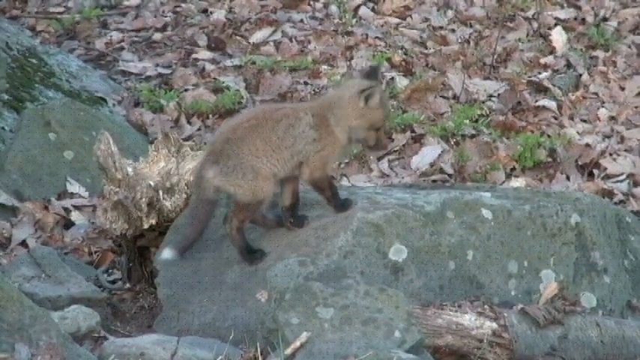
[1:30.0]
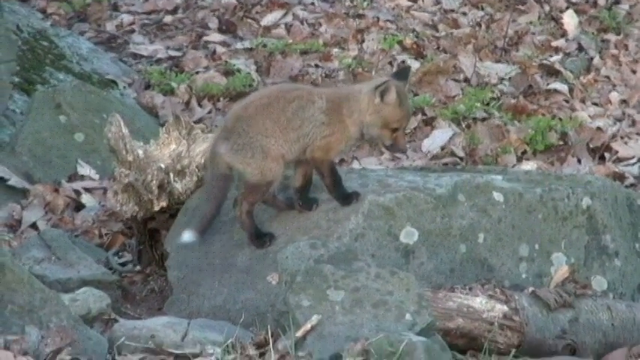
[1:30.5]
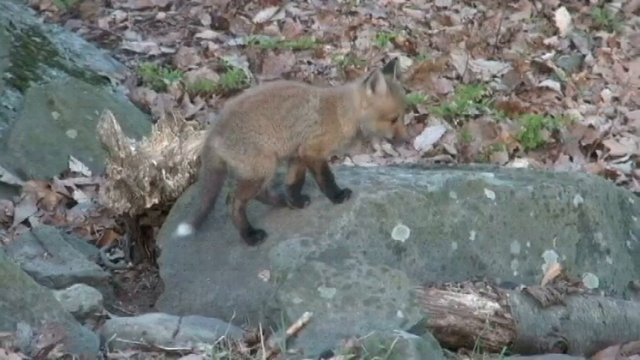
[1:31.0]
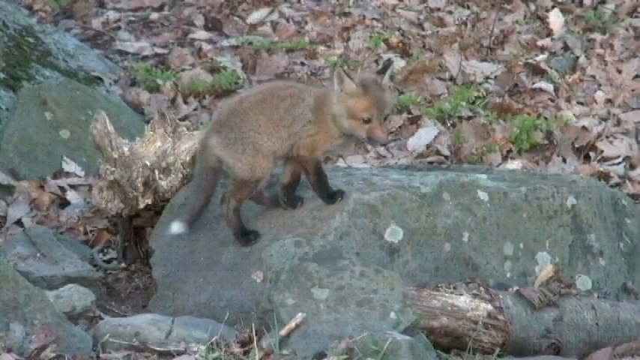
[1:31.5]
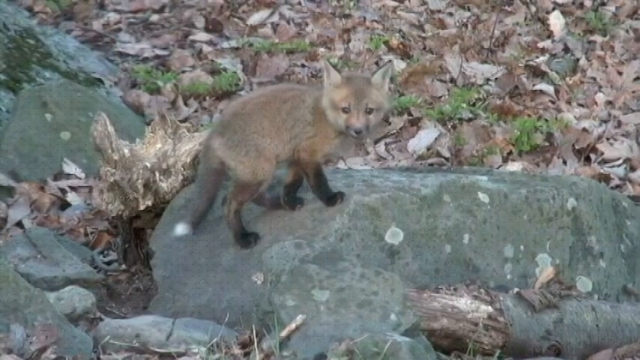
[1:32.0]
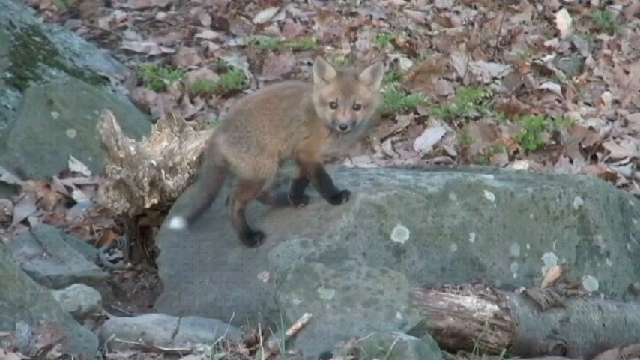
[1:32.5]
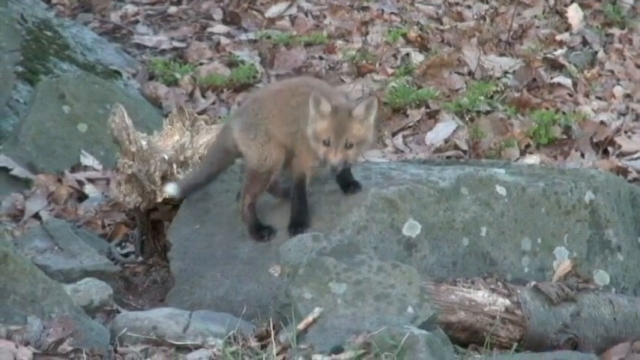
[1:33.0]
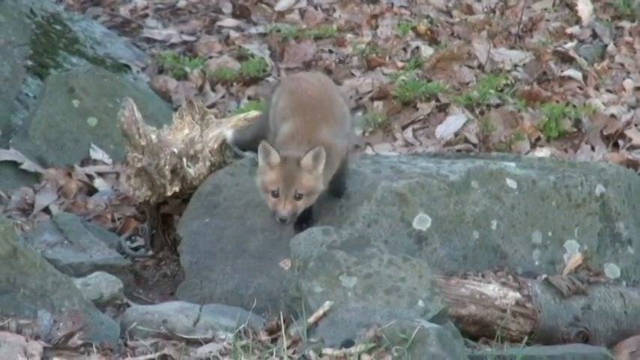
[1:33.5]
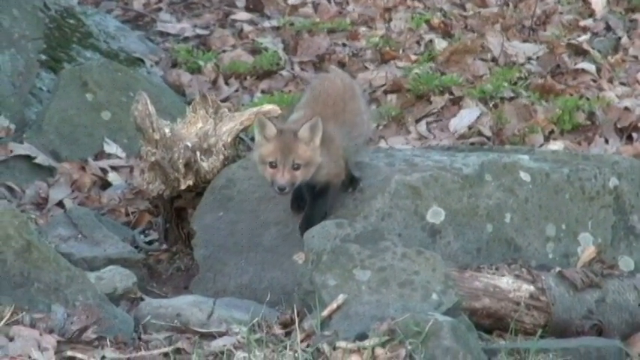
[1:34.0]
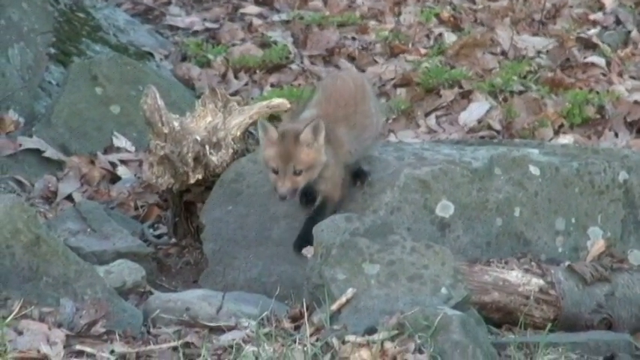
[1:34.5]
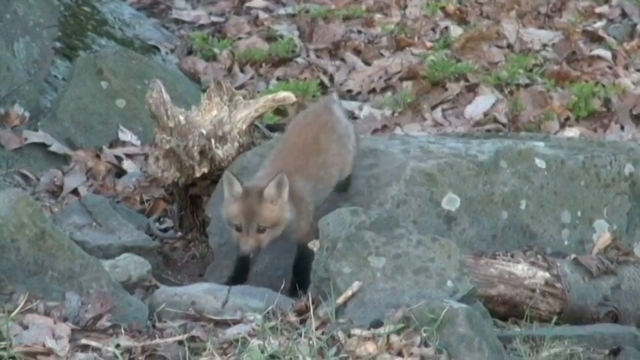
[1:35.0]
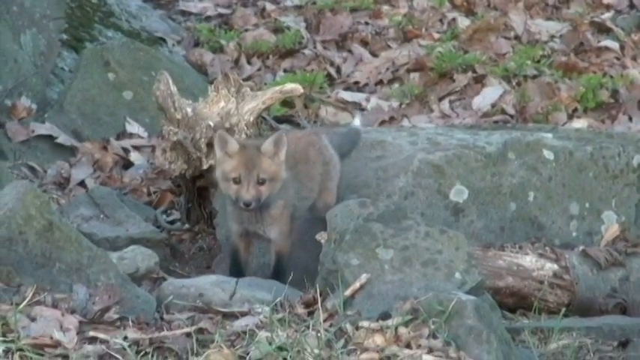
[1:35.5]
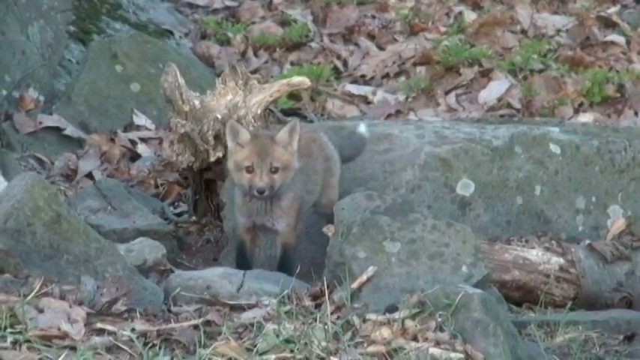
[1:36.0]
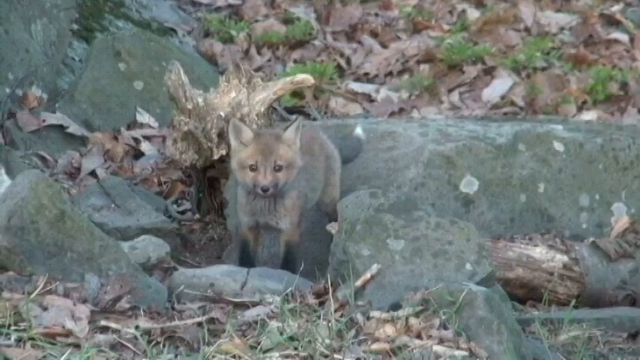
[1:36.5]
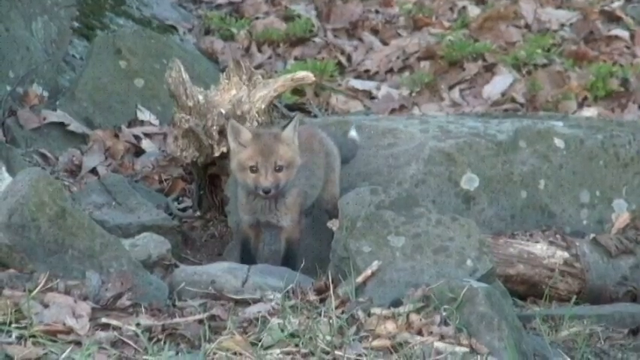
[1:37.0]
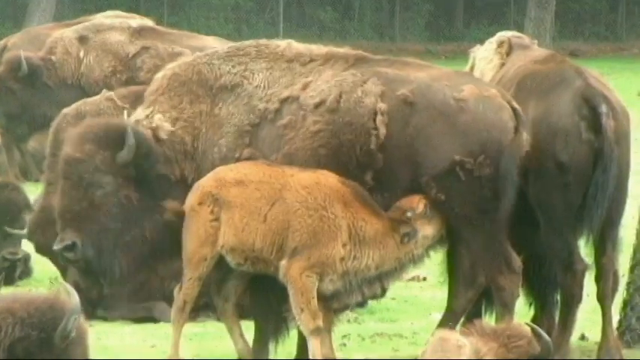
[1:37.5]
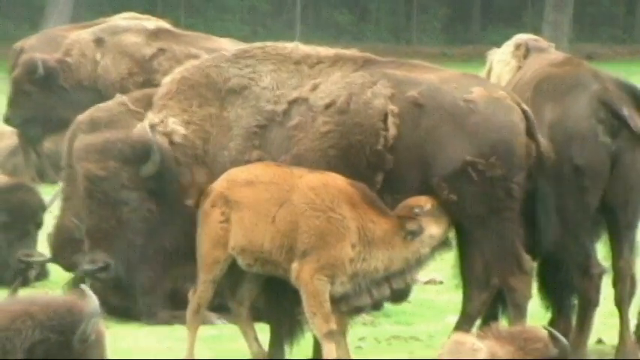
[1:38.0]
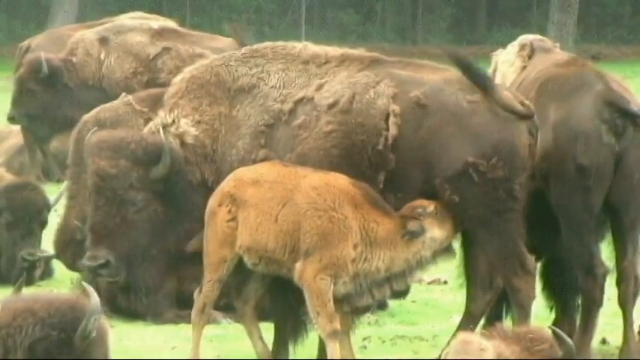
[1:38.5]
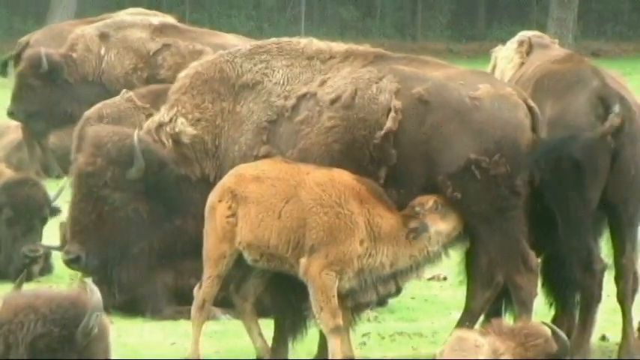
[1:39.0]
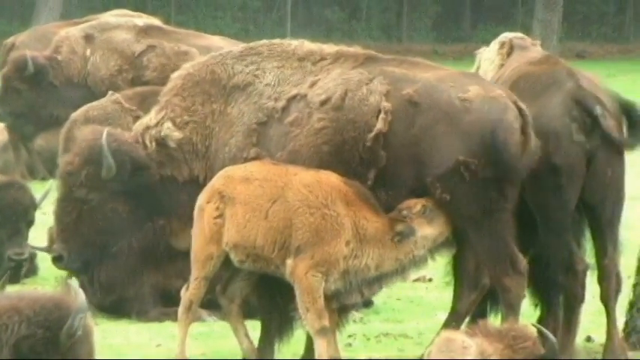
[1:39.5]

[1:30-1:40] A small young fox cub seems to be exploring some sort of forest, with a lot of dried leaves on the ground next to him, and seems to be exploring some rocks in the middle of the forest and dried leaves. The fox turns to look at the camera and looks startled, seemingly also slightly scared. Before it is seen whether he runs away, the video transitions to a young buffalo's mother, apparently a female buffalo, with a younger buffalo feeding from her milk.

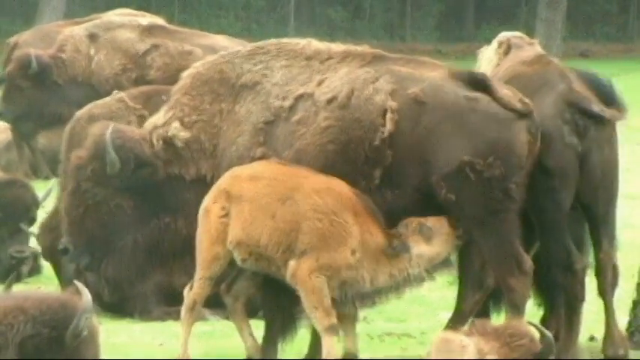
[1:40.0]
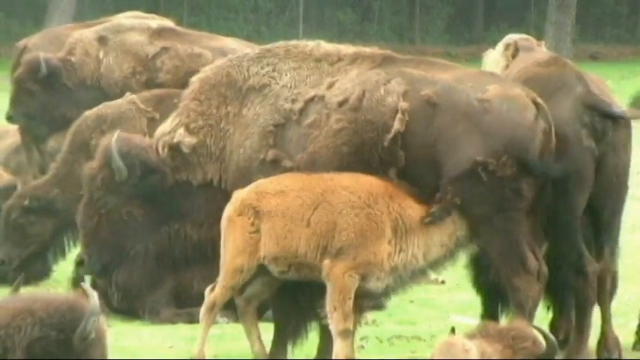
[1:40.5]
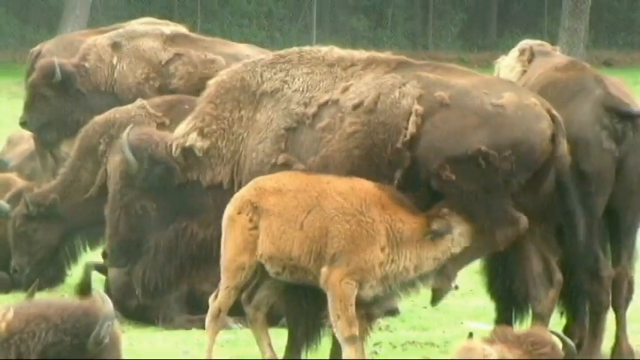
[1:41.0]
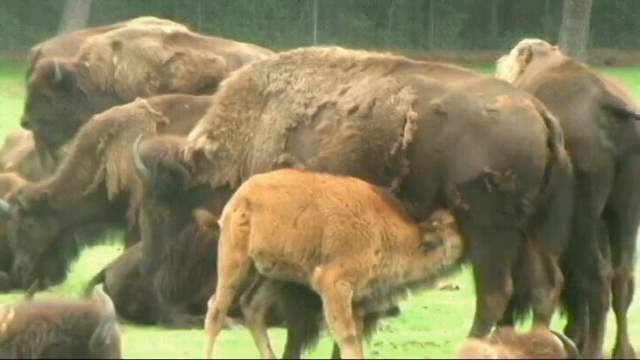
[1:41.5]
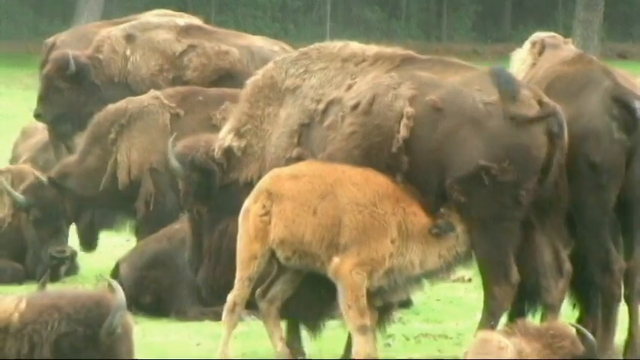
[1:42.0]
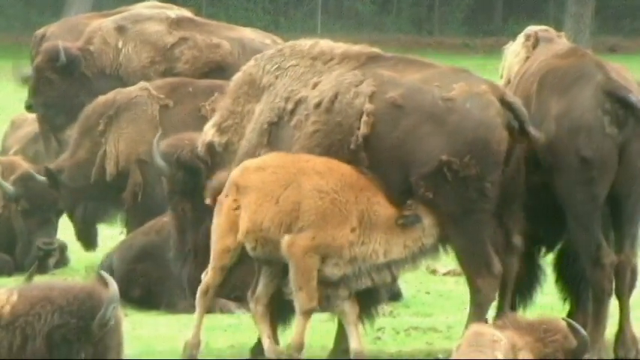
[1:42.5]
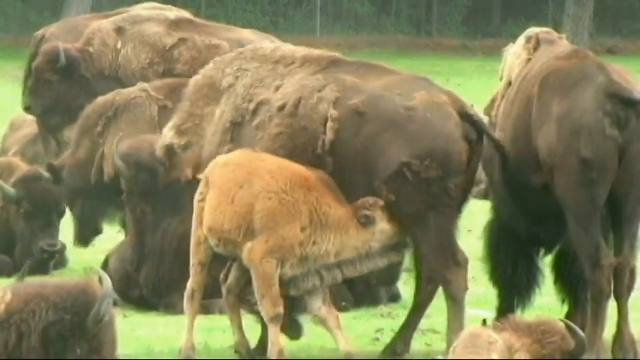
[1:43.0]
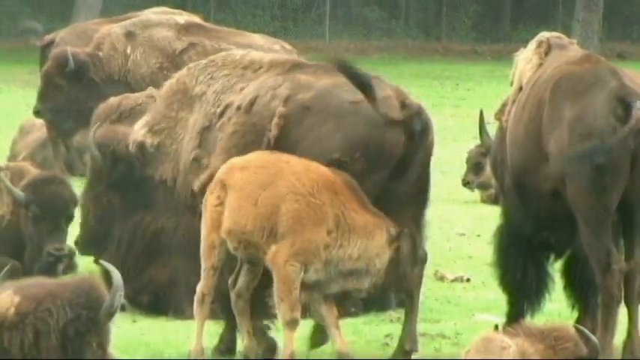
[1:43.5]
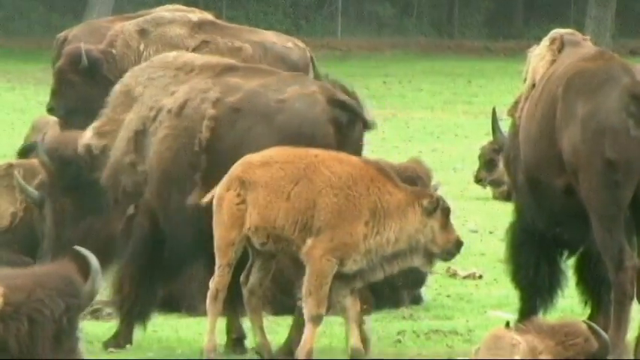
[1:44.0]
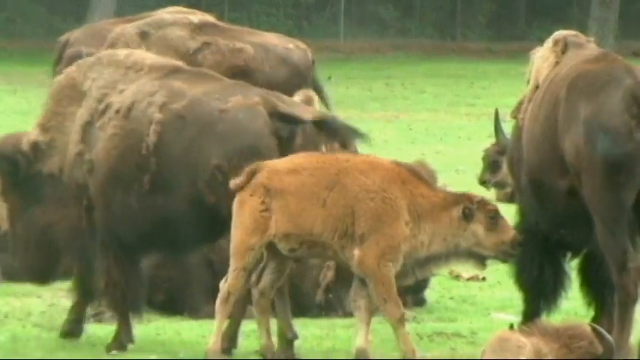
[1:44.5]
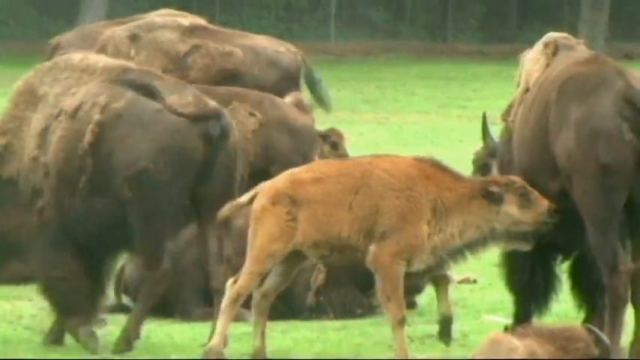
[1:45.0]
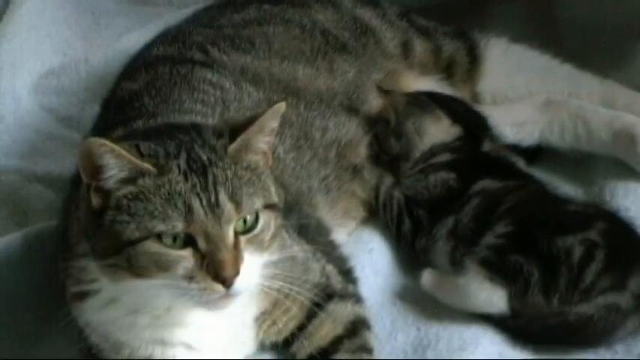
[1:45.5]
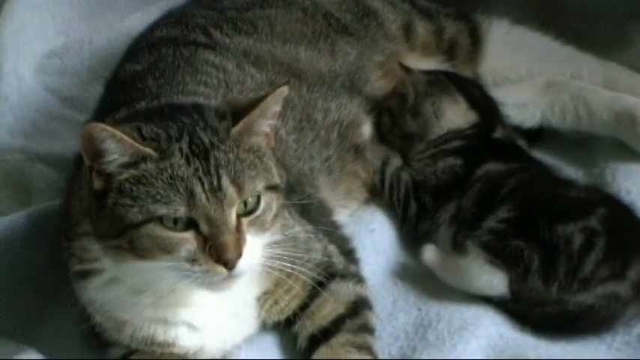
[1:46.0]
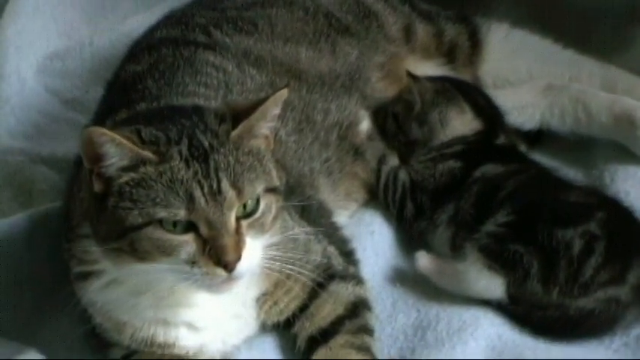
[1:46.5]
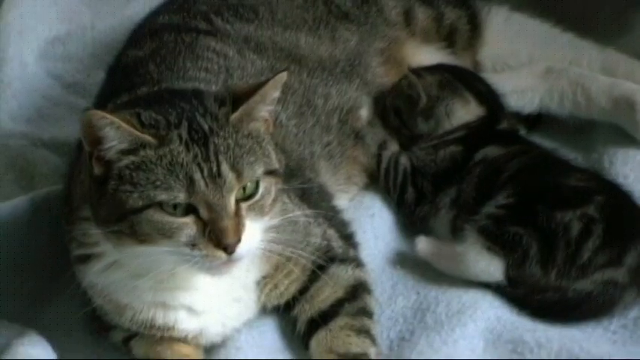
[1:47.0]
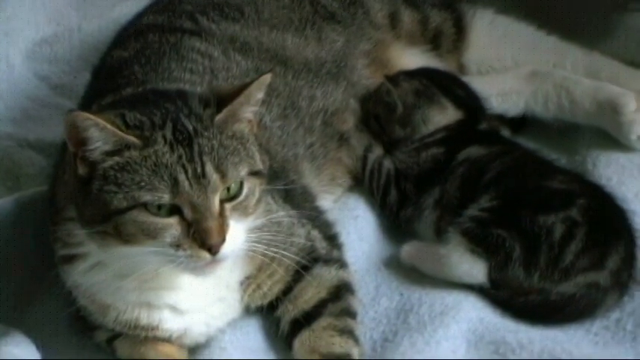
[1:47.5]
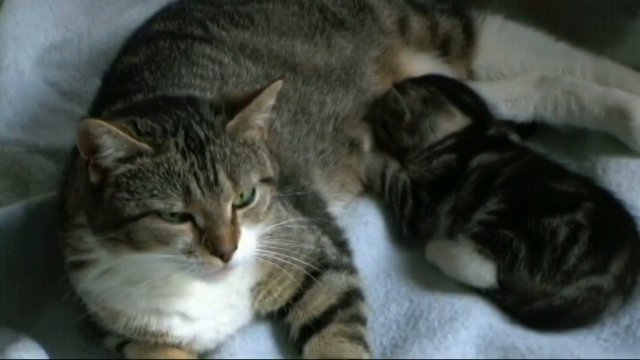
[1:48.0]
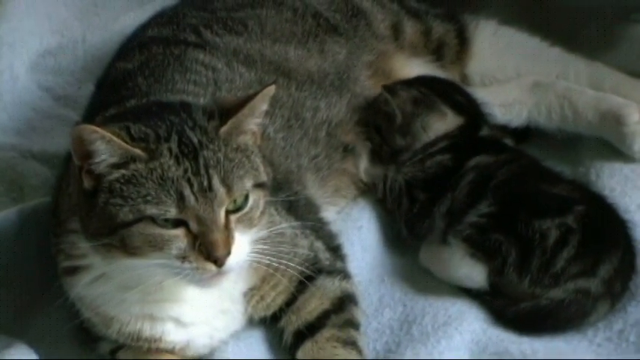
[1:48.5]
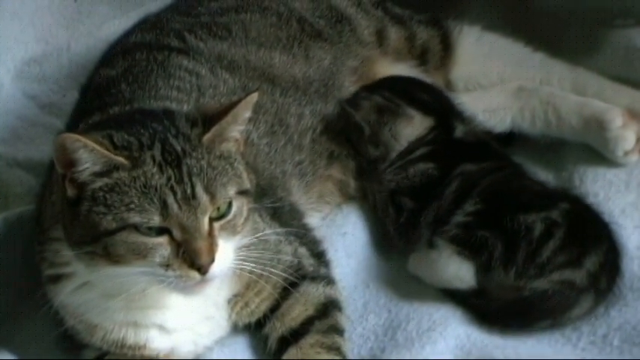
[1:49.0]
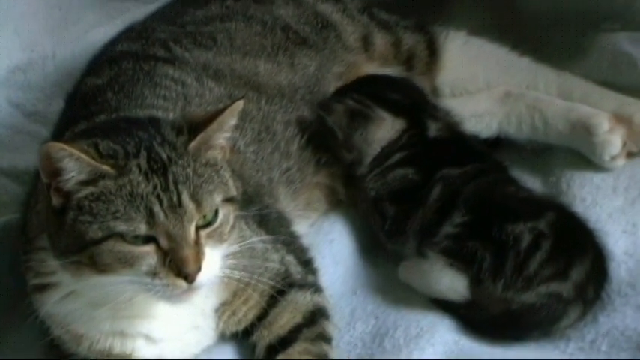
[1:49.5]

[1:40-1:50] The buffalo mother seems to be eating grass while her young feeds on her milk. At some point the young kind of hits her leg with his head, and the mother moves away from her young, which stops feeding. The video then transitions to a mother cat lying on her side while one of her kittens lies next to her, nursing on her milk. Both appear to be tabby cats.